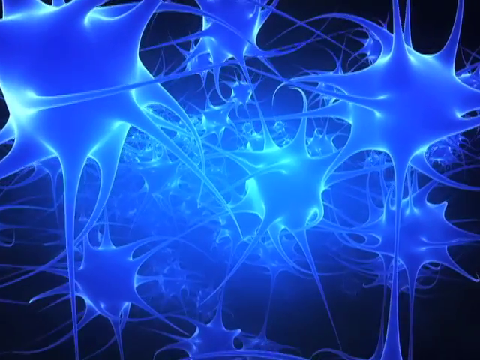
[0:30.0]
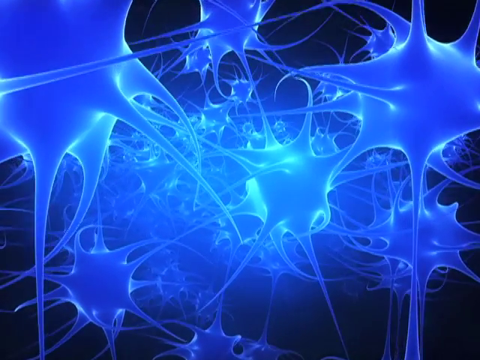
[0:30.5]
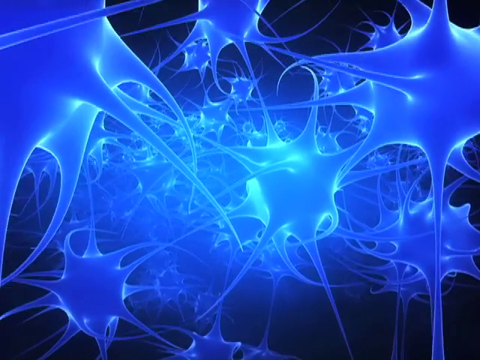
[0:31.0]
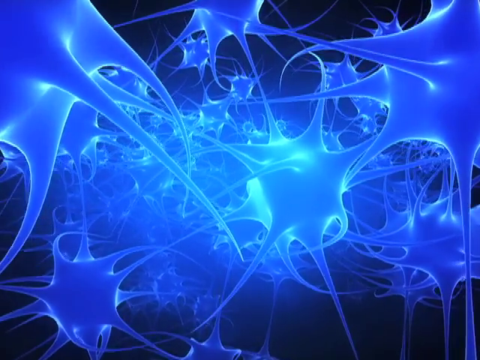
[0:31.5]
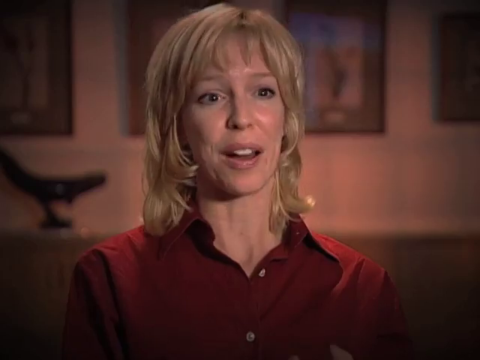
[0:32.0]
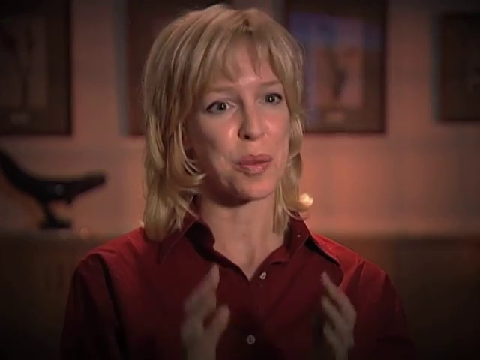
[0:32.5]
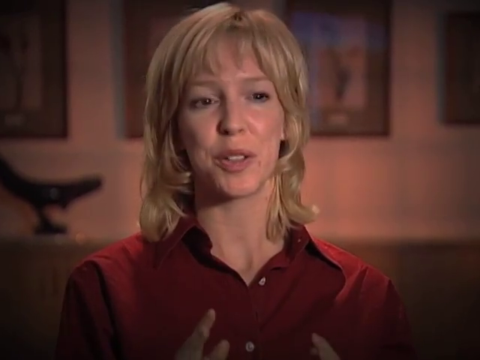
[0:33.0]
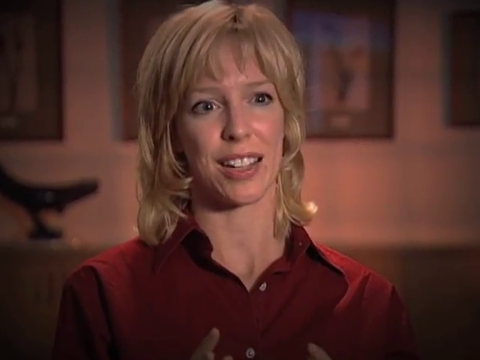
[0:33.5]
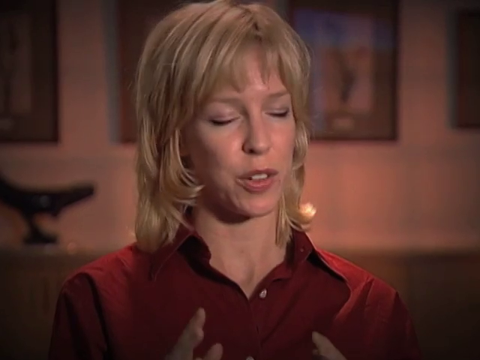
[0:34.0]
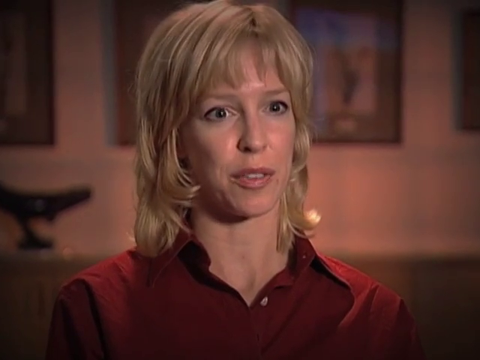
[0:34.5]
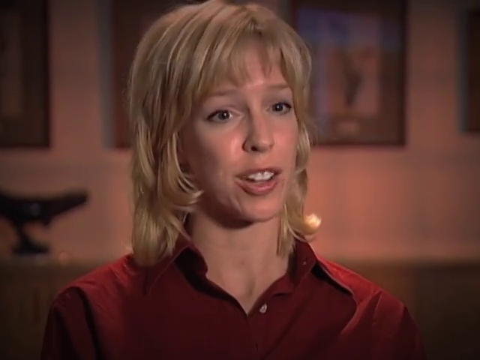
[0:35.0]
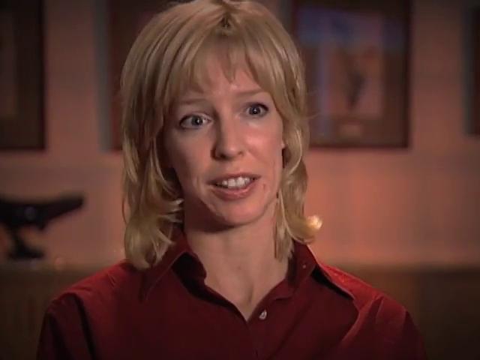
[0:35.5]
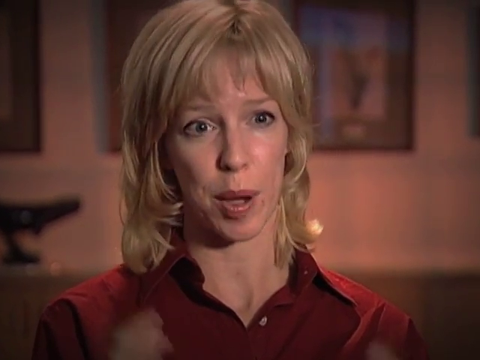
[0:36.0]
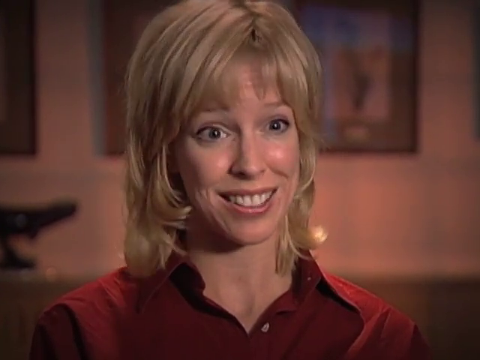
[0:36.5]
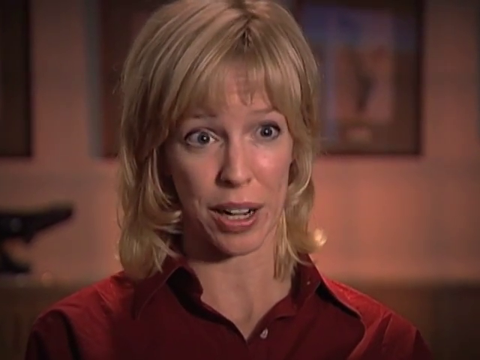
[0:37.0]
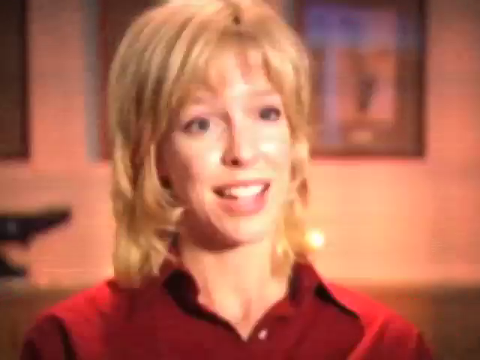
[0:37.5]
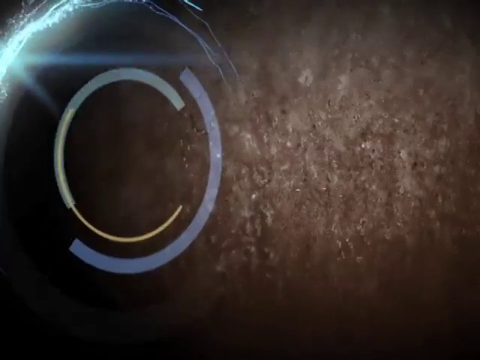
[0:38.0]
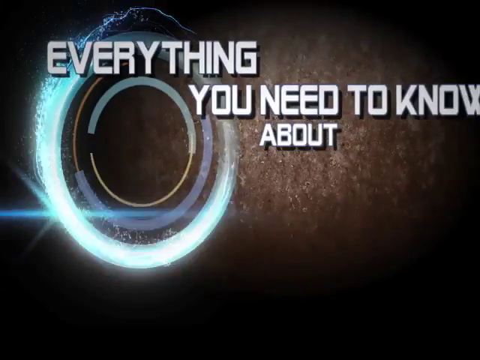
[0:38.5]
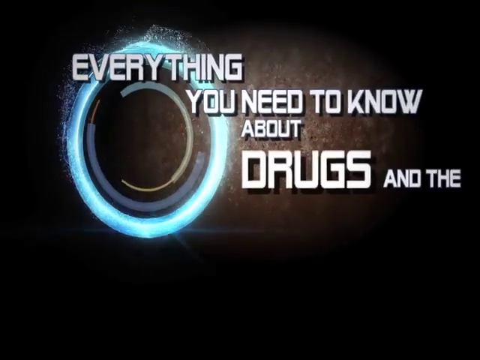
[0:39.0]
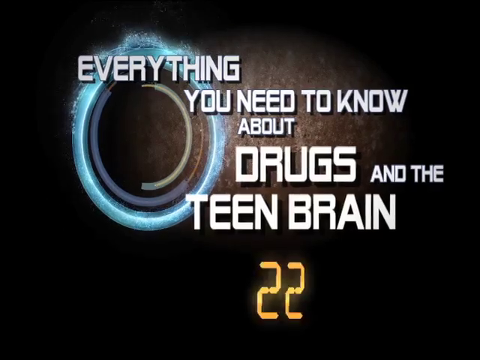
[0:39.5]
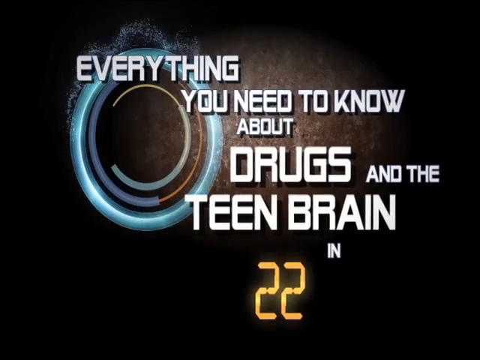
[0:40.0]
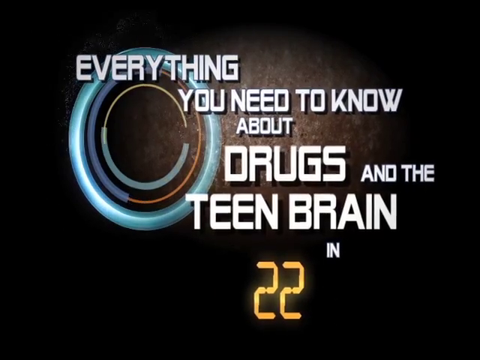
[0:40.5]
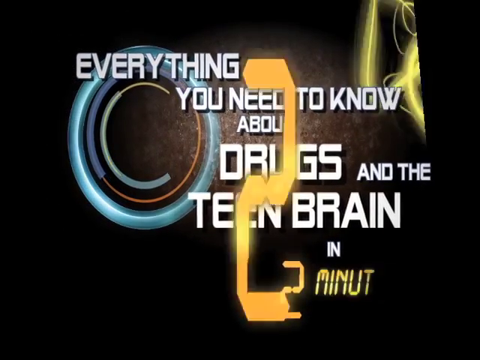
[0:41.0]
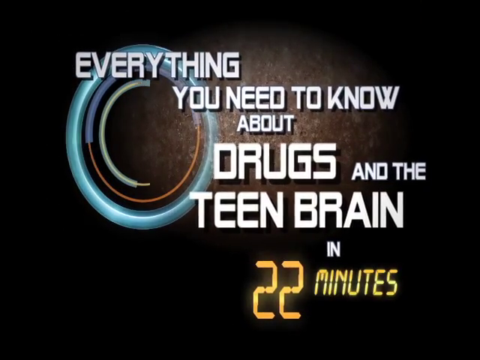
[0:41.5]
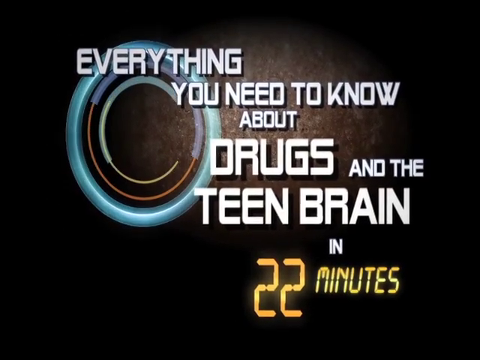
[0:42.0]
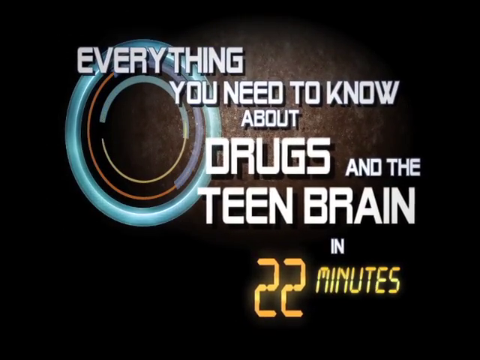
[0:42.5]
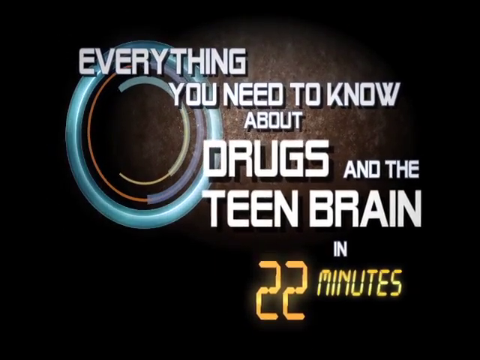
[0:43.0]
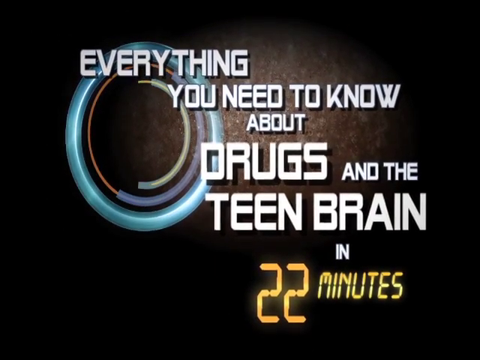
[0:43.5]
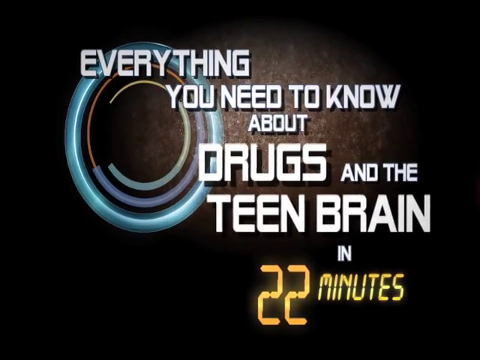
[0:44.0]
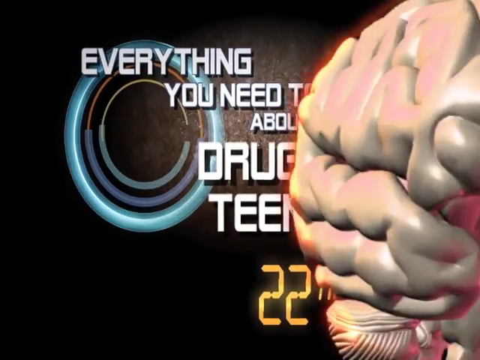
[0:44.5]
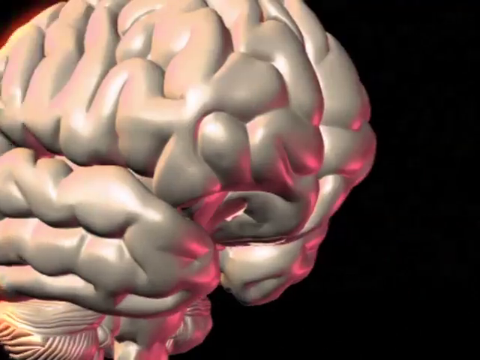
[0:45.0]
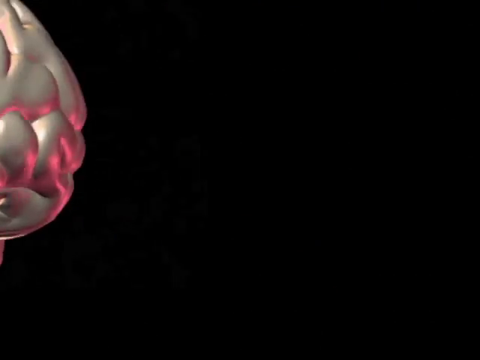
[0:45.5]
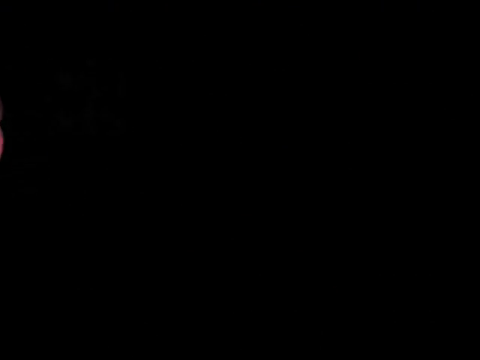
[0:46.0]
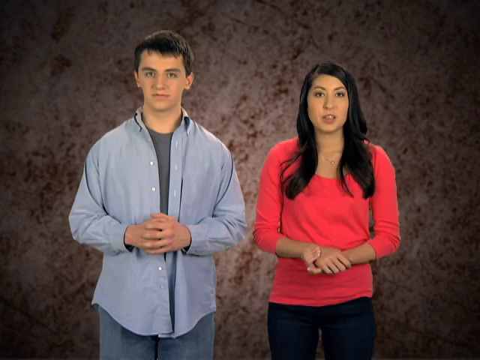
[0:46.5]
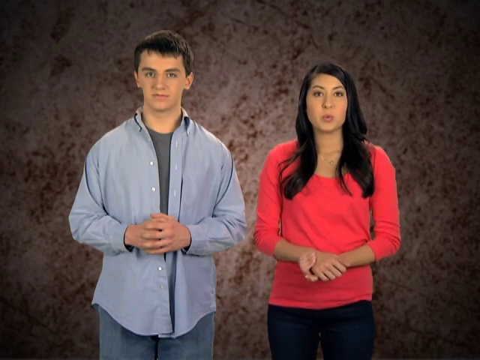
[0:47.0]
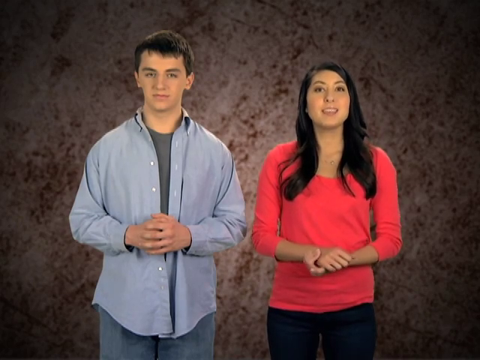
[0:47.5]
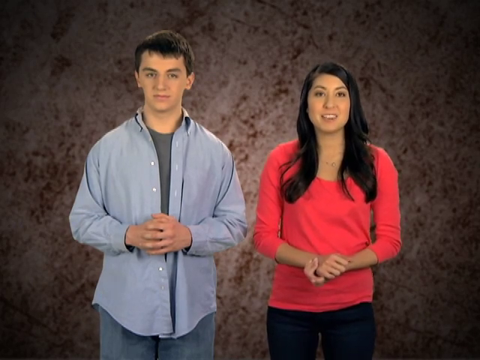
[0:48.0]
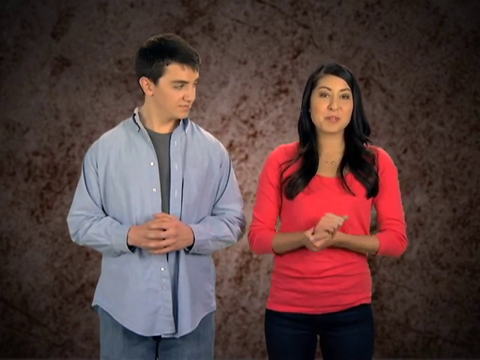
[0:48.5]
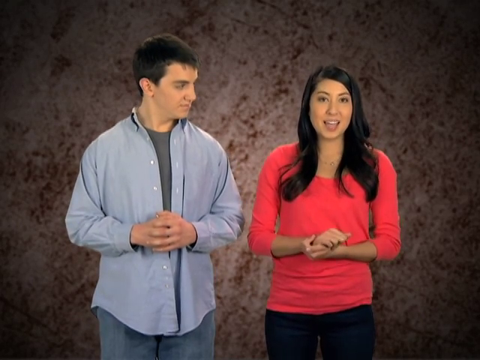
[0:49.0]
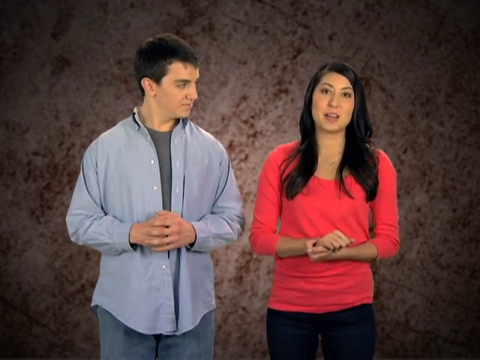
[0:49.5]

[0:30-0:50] An image of a patient's head from the side shows the skull and the brain within its casing. To the left of the imagery, the screen shows information about the patient: "patient information" at the top, "auto view" toward the upper right, and "scan timing" at the lower left. The view moves down to an image of a cluster of neural networks, showing nerve fibers connecting into the clusters. It then pans to a hallway full of teenagers walking, and then to teenagers outside a school talking and running to their cars to get in. Next comes a dark blue background with a translucent, light blue outlined brain in the center with a light glow around it; the view scrolls into the brain and shows various clusters of neurons. It then pans to a Caucasian woman speaking. She has short, shoulder-length, choppy blonde hair, large open blue eyes, and a button-up burgundy top. The wall behind her is light cream, with multiple indistinguishable framed images hanging on it.